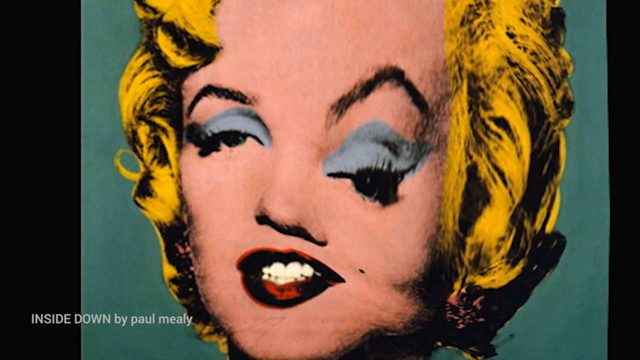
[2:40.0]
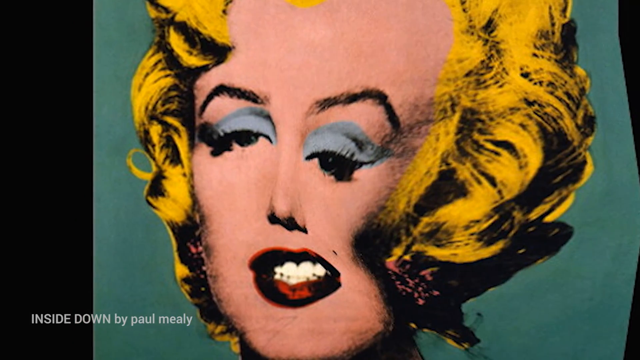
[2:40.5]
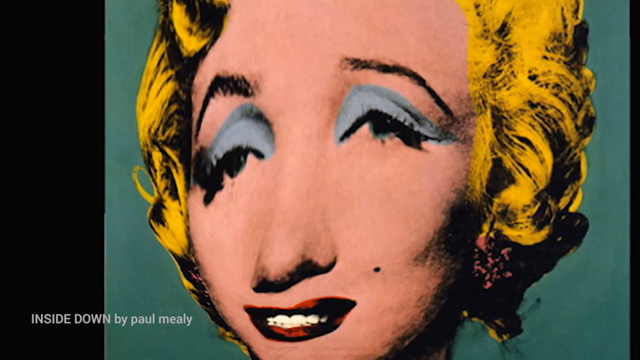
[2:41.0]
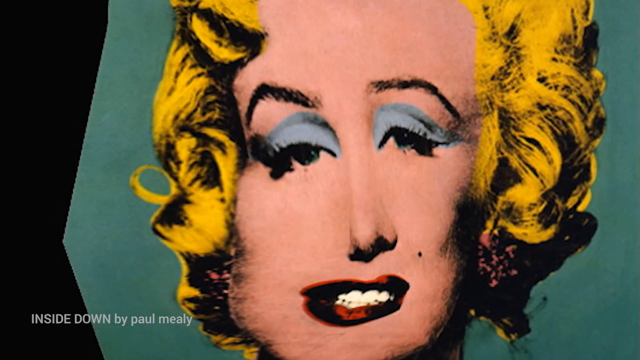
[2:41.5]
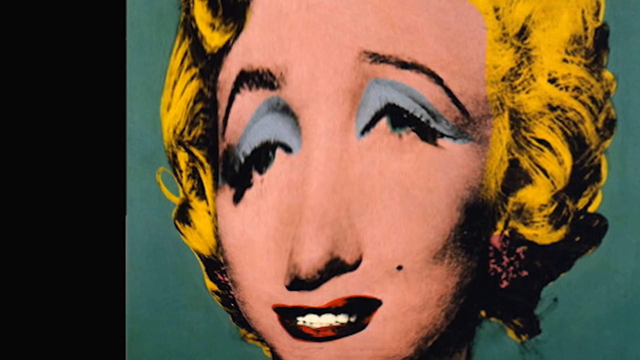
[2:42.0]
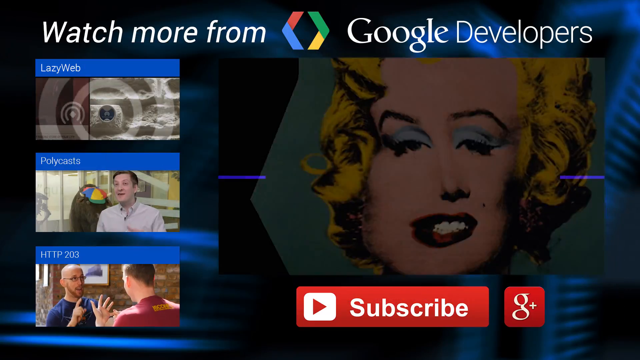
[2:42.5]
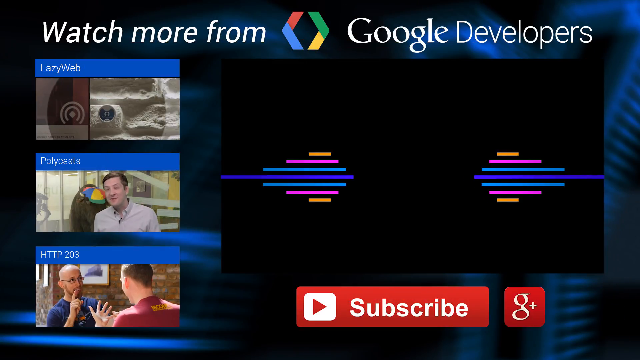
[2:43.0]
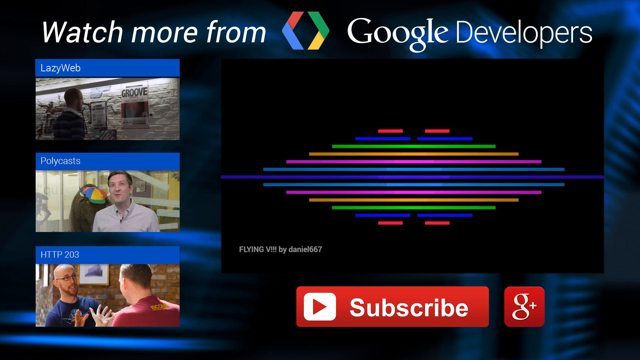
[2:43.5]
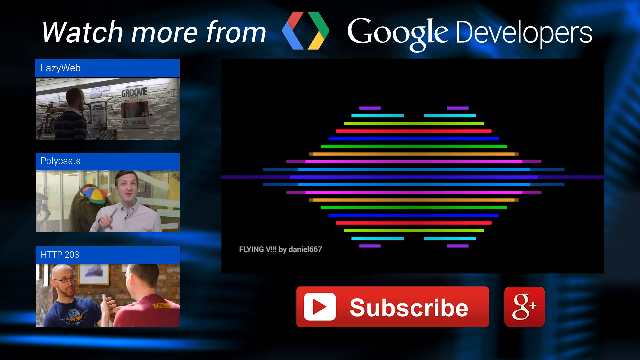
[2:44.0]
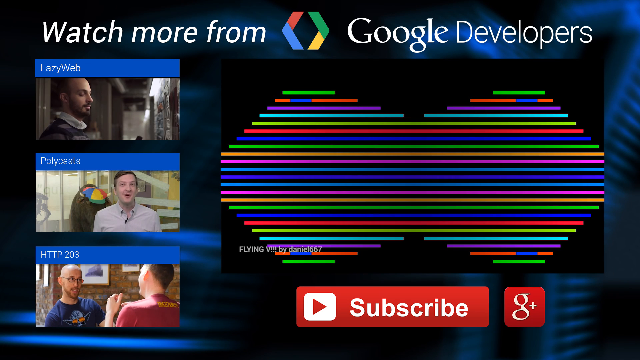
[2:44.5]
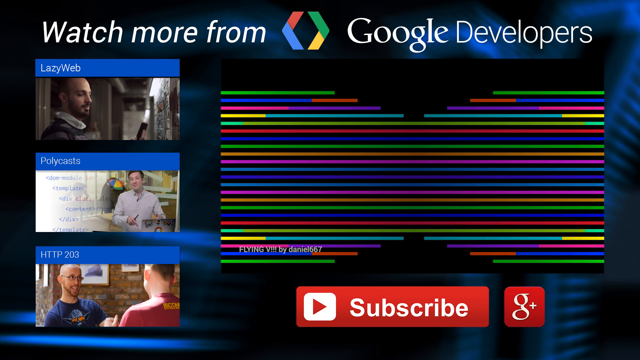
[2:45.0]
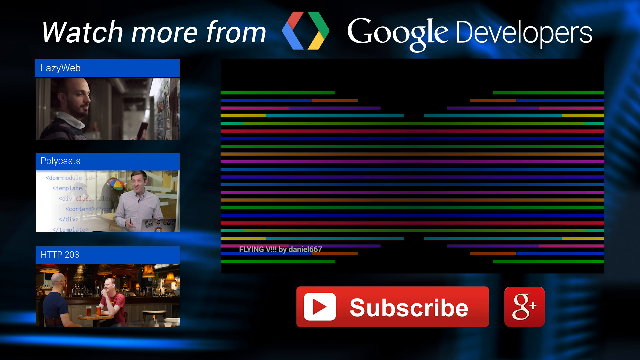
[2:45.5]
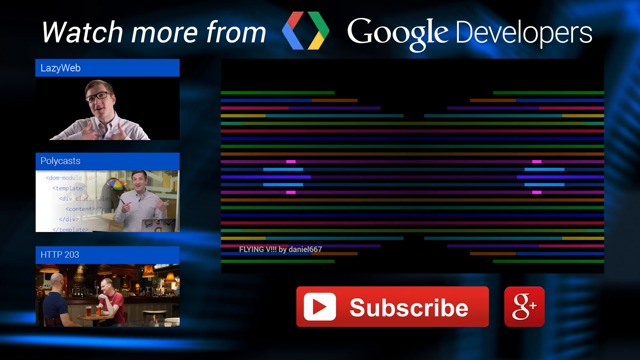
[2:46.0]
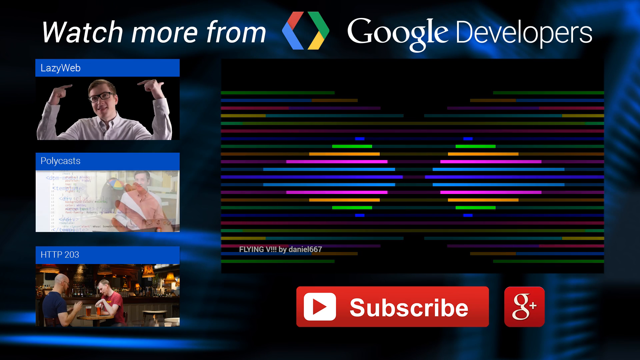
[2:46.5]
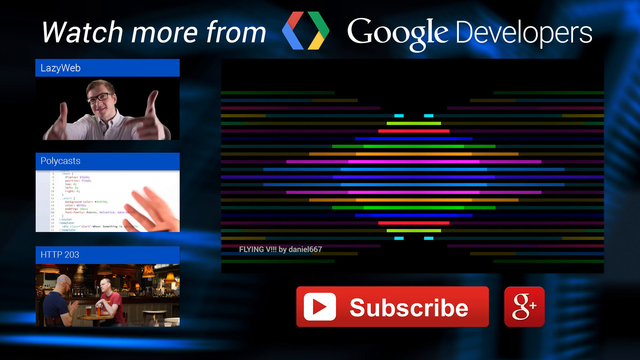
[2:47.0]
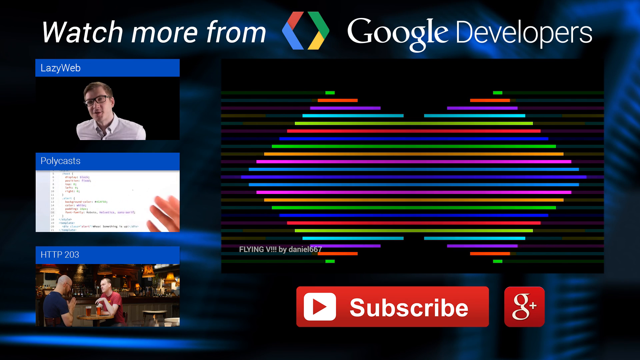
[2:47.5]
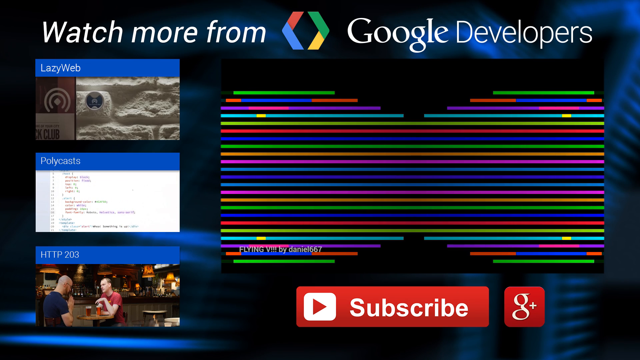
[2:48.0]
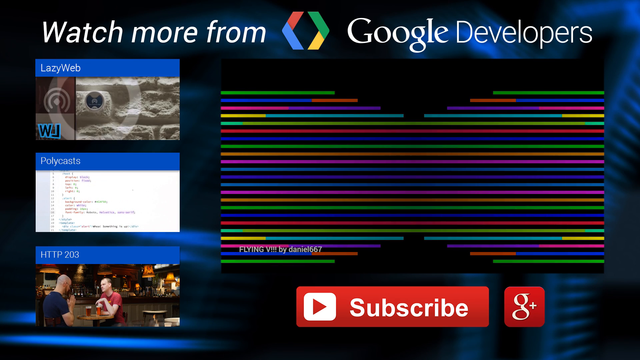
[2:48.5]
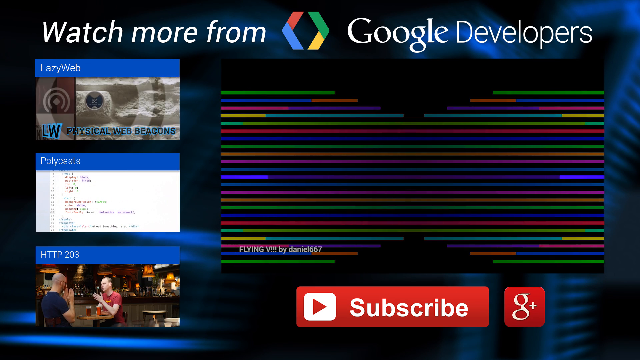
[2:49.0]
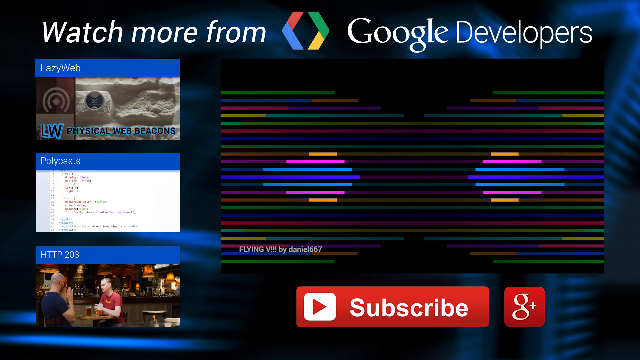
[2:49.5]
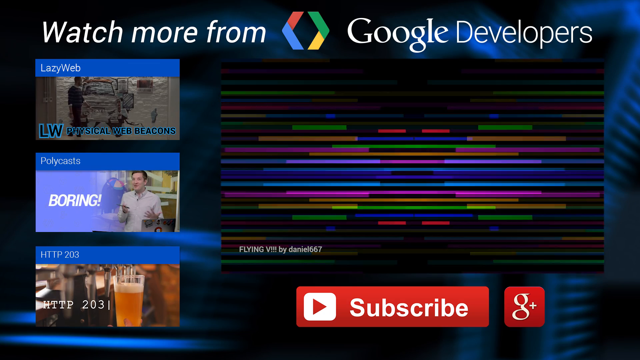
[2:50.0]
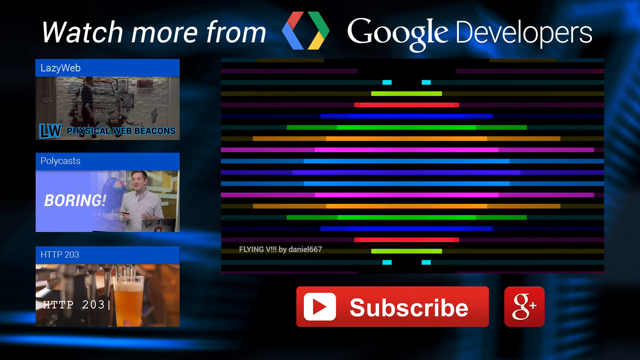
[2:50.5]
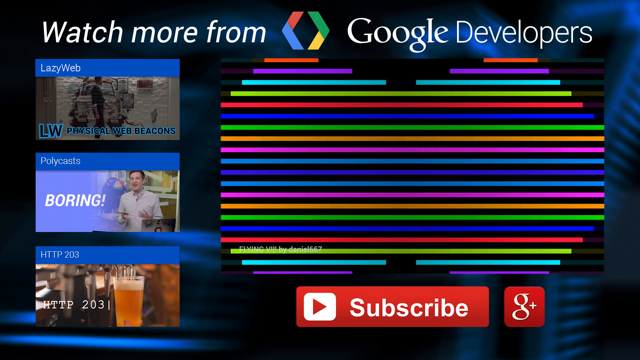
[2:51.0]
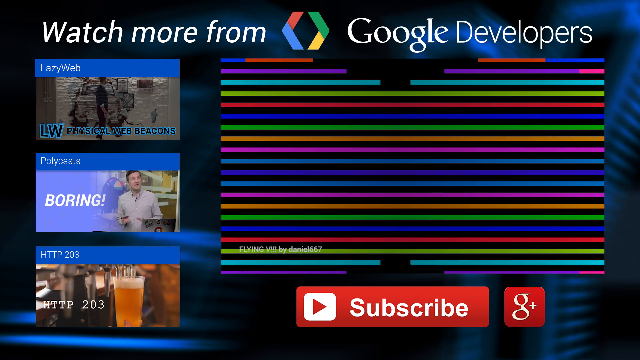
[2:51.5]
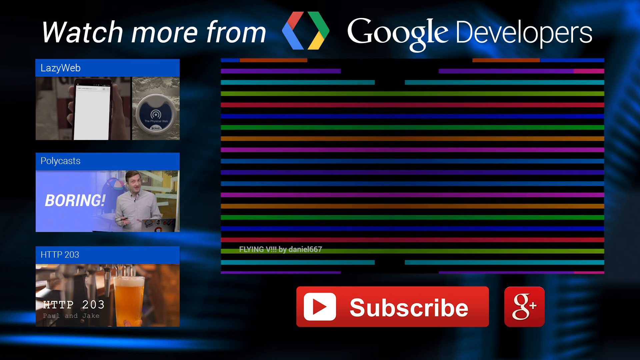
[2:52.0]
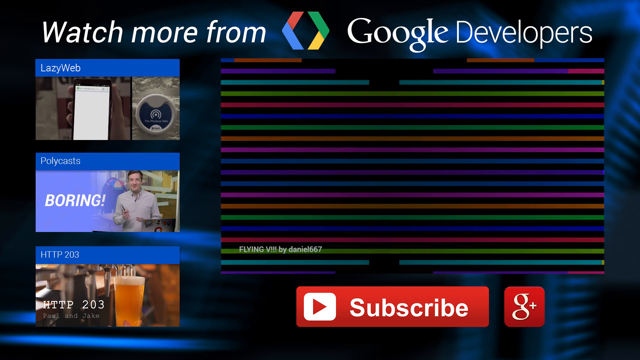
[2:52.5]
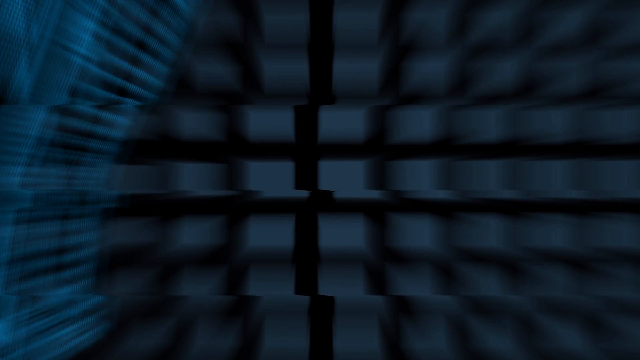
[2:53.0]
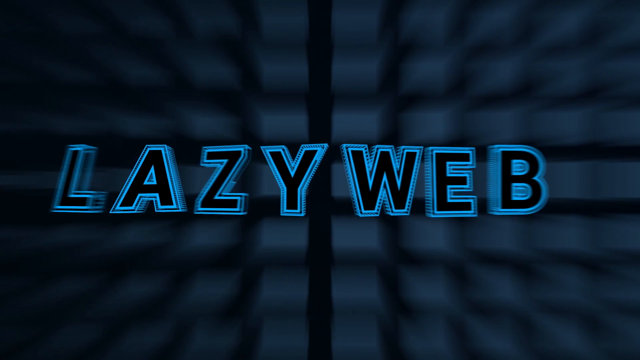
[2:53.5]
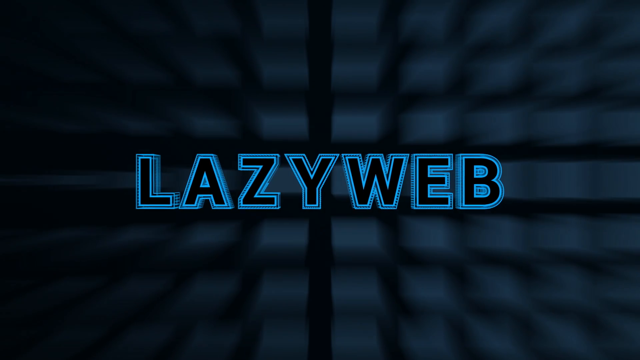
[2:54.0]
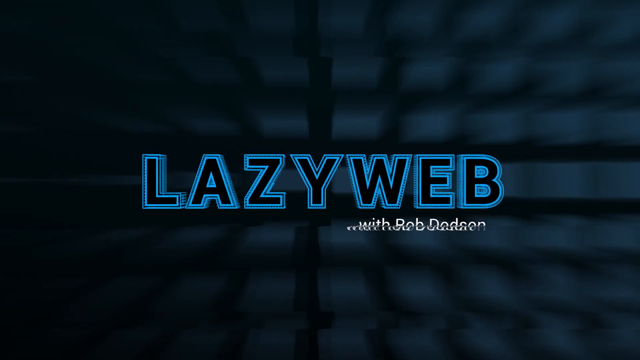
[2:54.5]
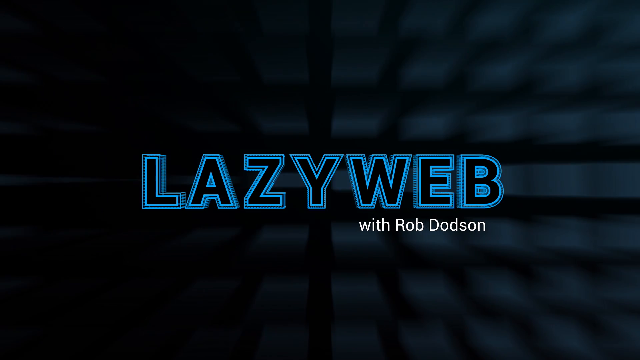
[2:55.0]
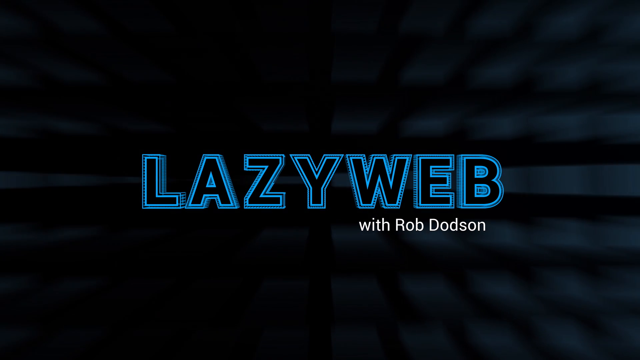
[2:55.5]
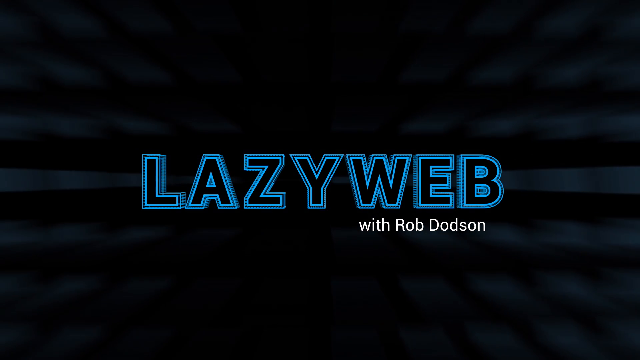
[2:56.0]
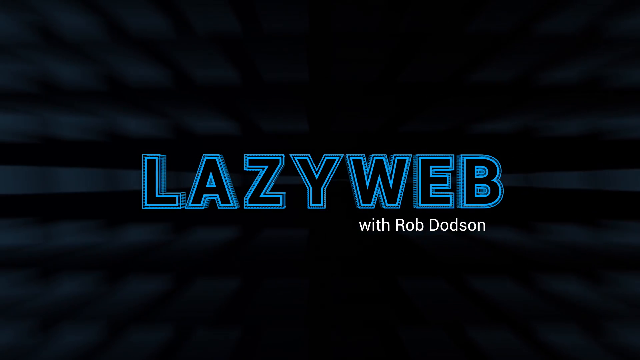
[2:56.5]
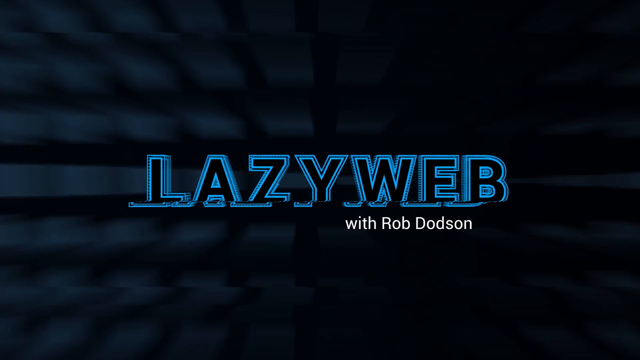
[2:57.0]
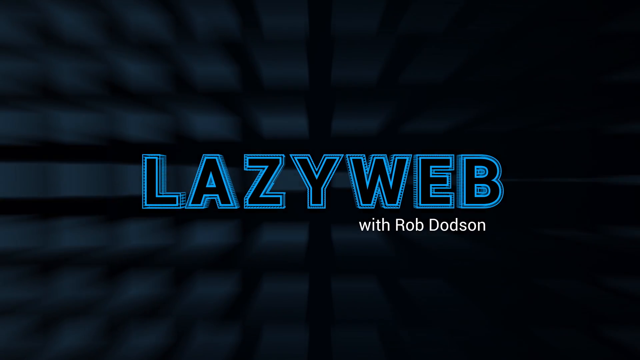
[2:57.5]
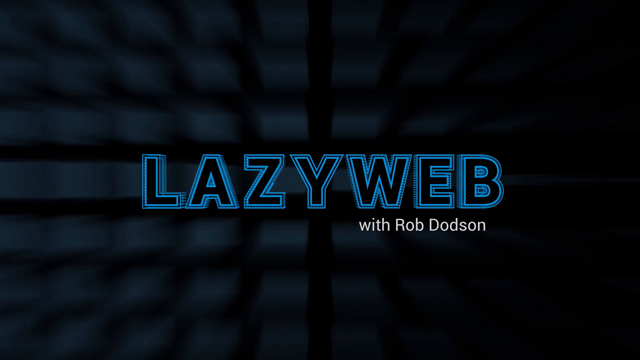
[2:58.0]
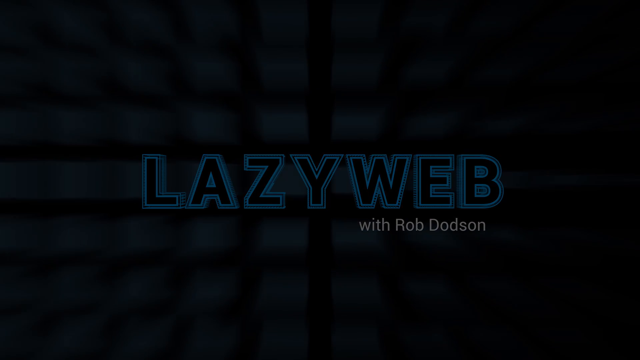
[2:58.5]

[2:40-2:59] Marilyn Monroe's face continues to be distorted, with her eye dropping down and her nose distorted. The text "inside down by Paul Mealy" is at the bottom. This goes off the screen, and at the top white italic text says "watch more from", followed by a logo for Google Developers: two lines bent in the middle like sideways V's, the left one red and blue and the right one green and yellow. Underneath, three videos play on the left-hand side, one from LazyWeb, one from Polycasts and one from HTTP 203, each with different things going on. On the right-hand side, multiple colored lines run straight, and the colors fade and come back around so it looks like arrows going in and out of the screen. In the bottom right is a red subscribe symbol. This all fades off the screen, leaving the same background as the start, with black text saying "LAZYWEB" in capital letters with a blue outline, and then "with Rob Dodson" in white.